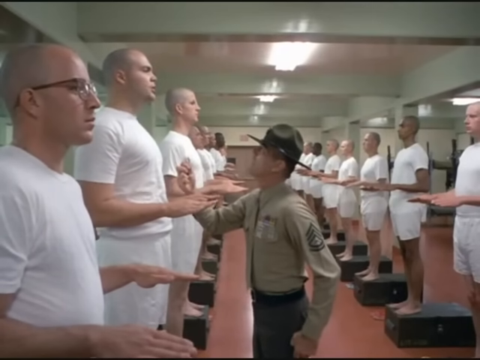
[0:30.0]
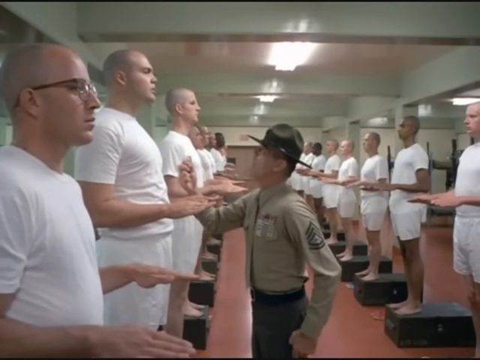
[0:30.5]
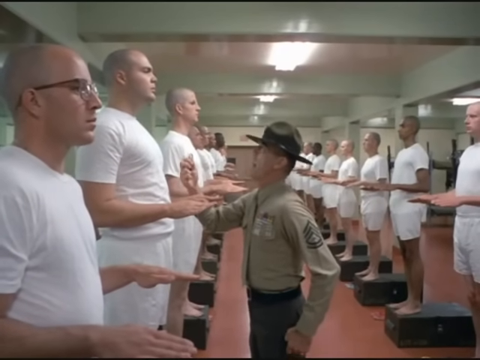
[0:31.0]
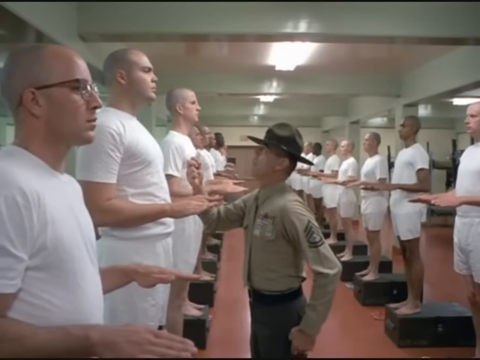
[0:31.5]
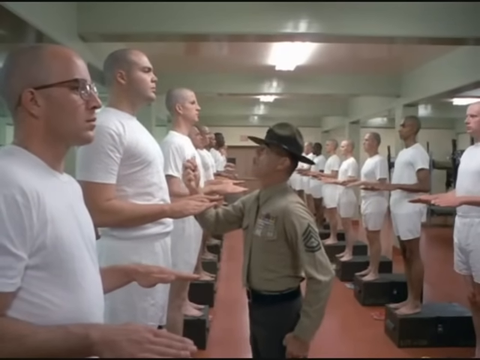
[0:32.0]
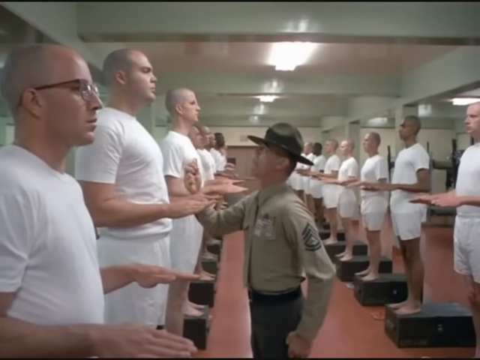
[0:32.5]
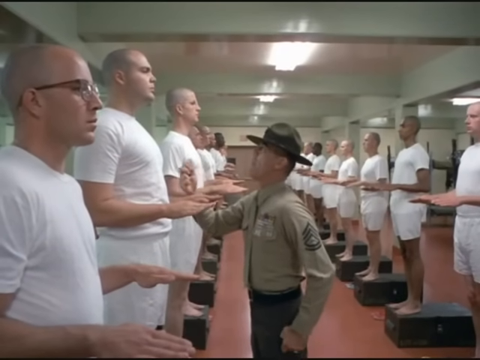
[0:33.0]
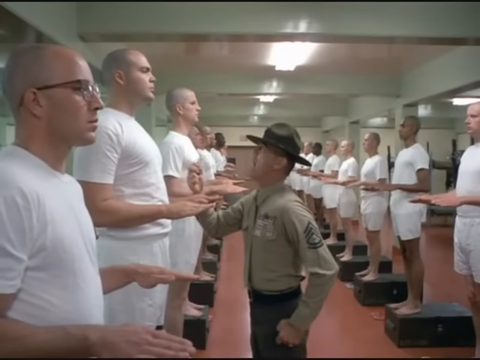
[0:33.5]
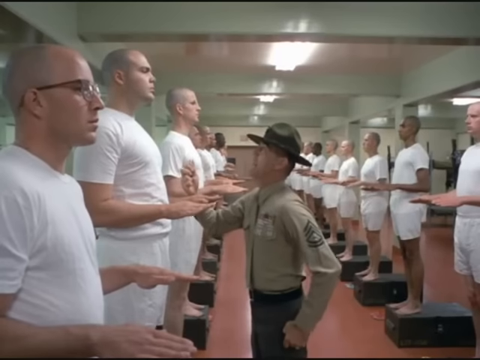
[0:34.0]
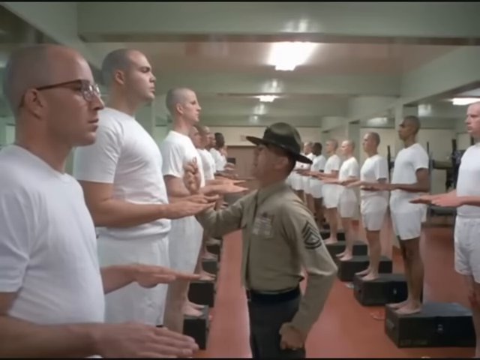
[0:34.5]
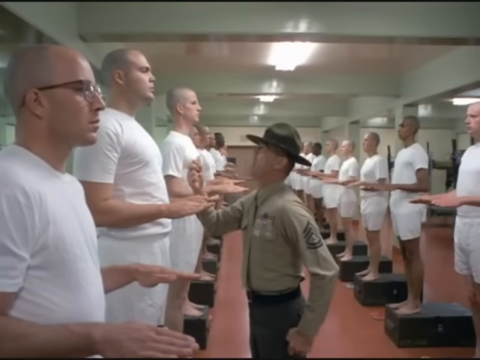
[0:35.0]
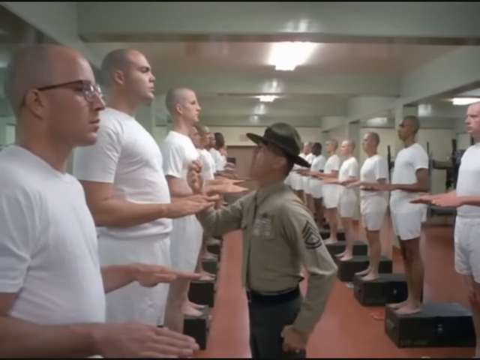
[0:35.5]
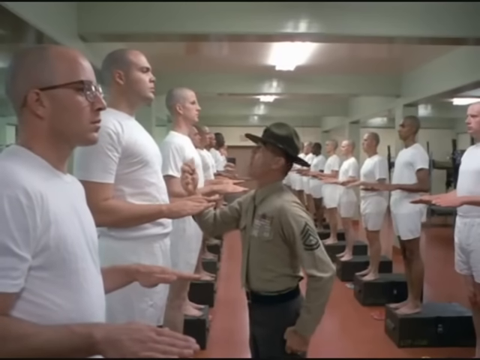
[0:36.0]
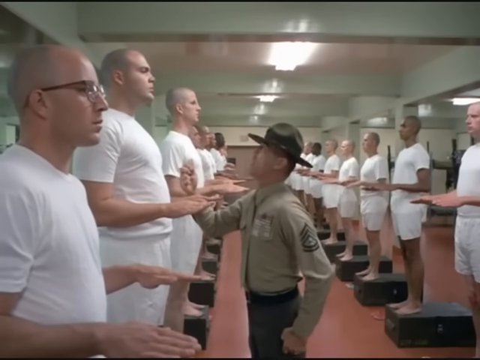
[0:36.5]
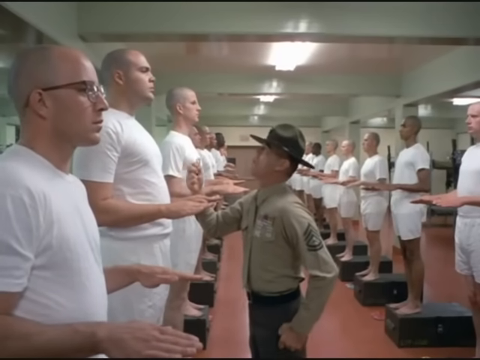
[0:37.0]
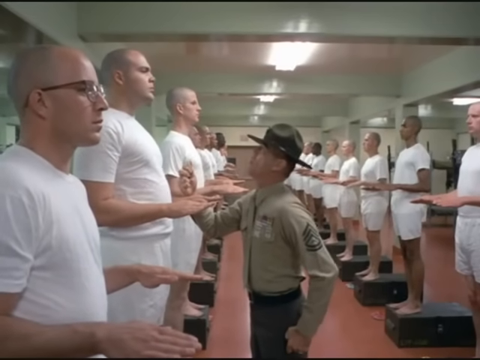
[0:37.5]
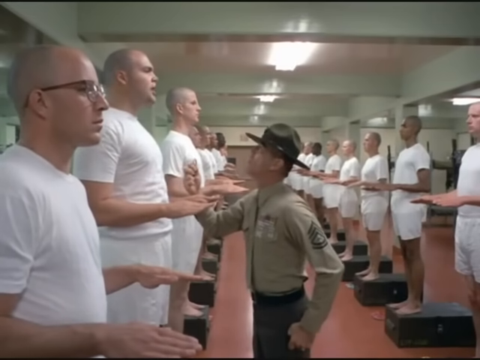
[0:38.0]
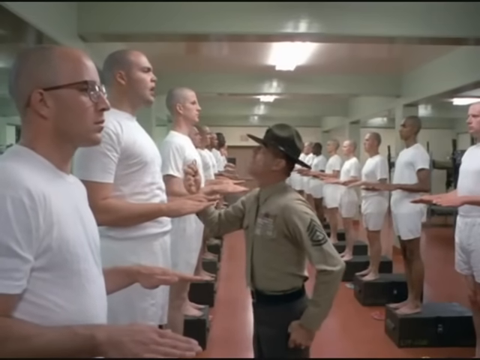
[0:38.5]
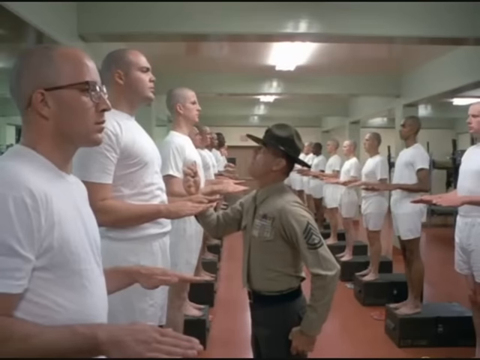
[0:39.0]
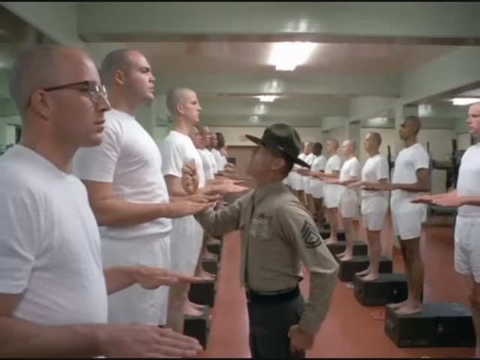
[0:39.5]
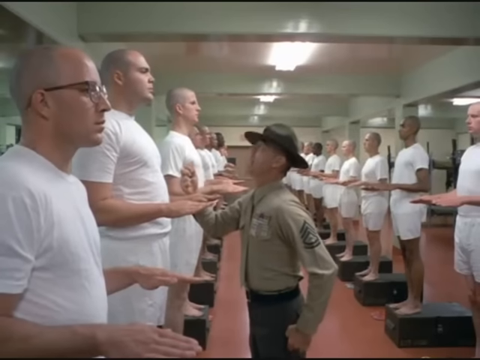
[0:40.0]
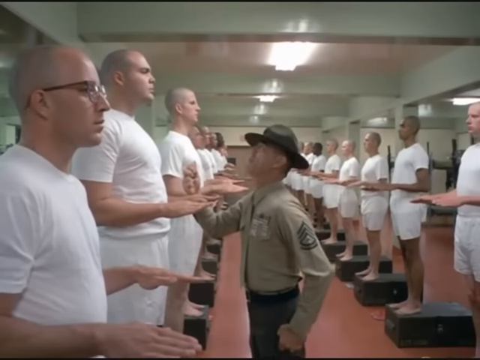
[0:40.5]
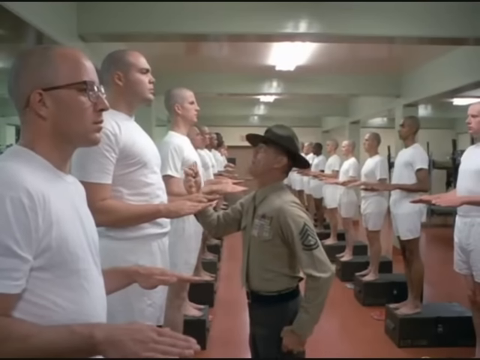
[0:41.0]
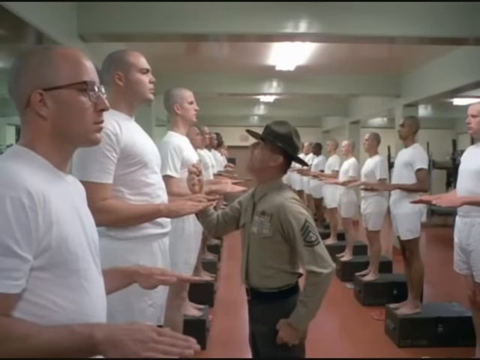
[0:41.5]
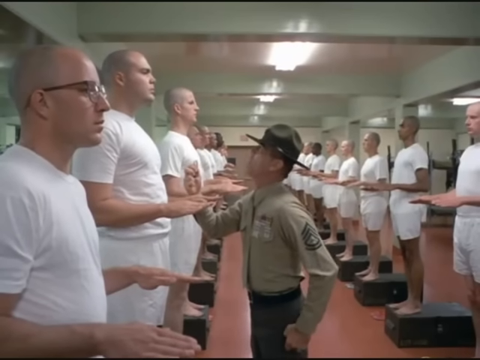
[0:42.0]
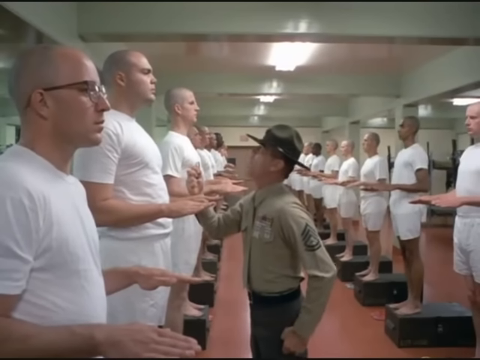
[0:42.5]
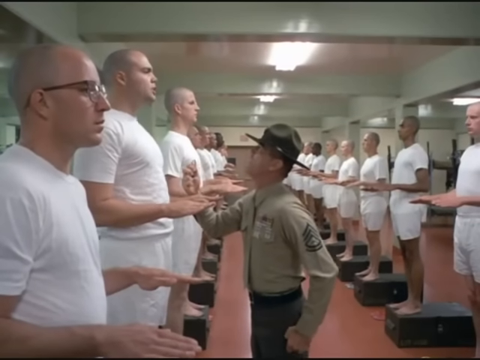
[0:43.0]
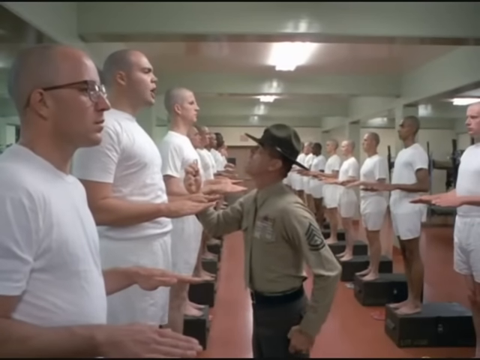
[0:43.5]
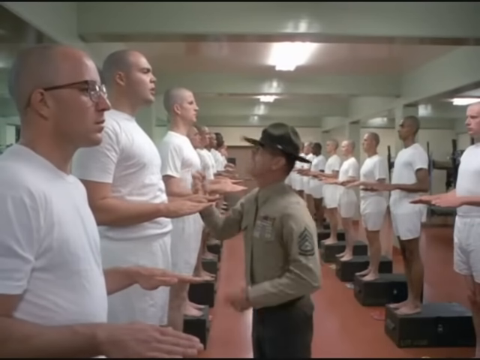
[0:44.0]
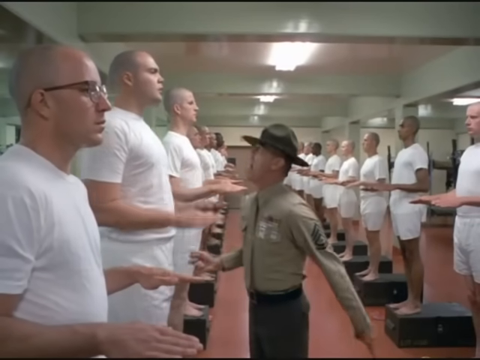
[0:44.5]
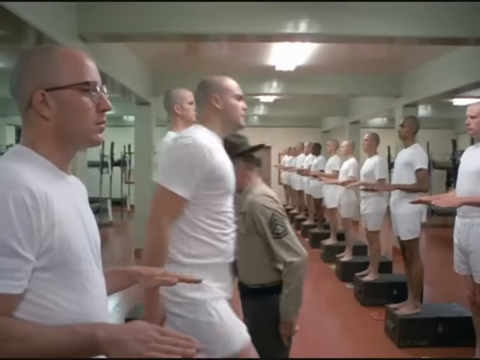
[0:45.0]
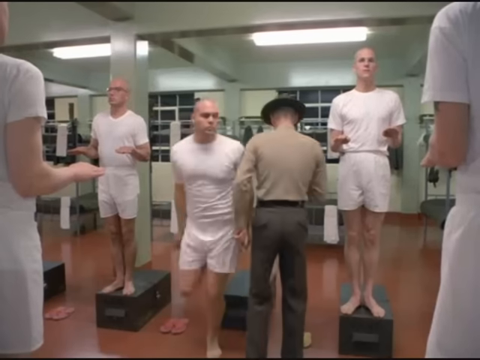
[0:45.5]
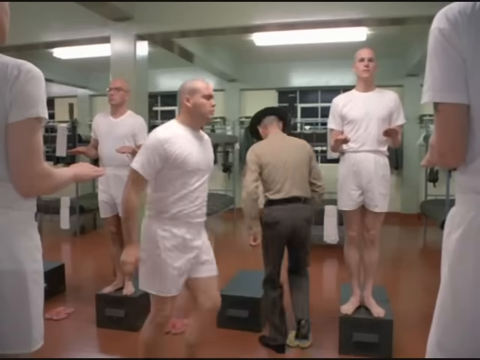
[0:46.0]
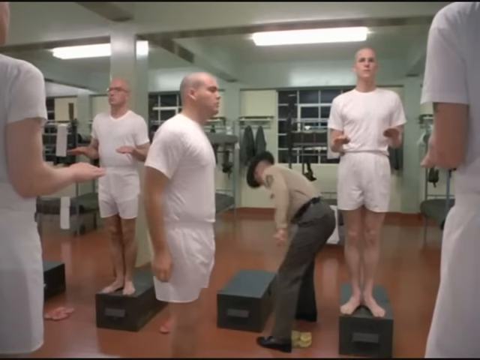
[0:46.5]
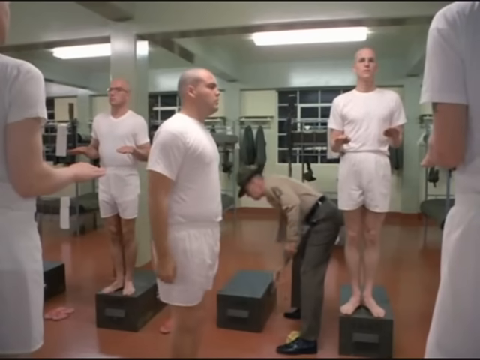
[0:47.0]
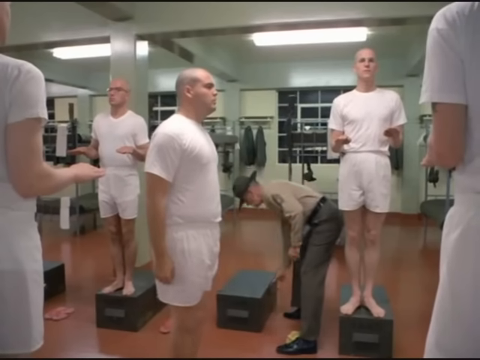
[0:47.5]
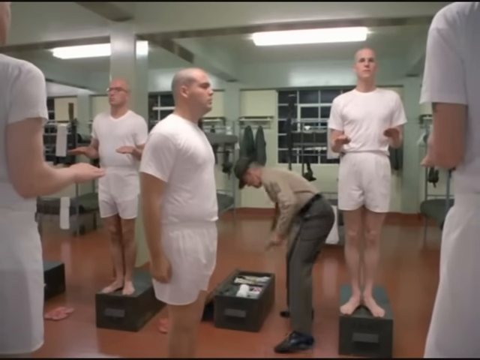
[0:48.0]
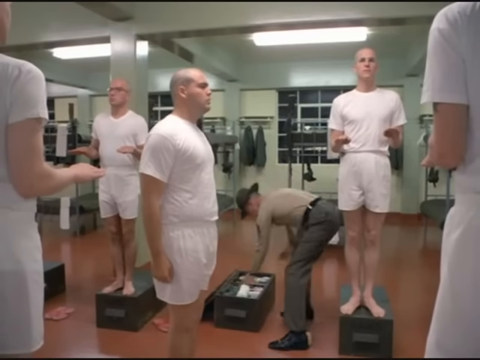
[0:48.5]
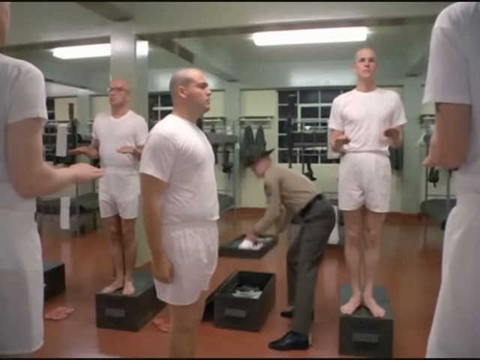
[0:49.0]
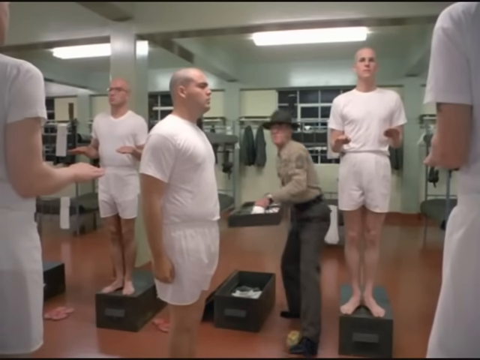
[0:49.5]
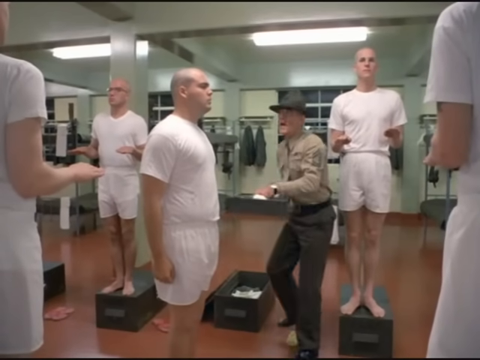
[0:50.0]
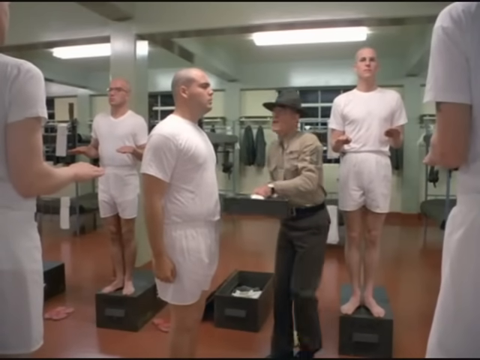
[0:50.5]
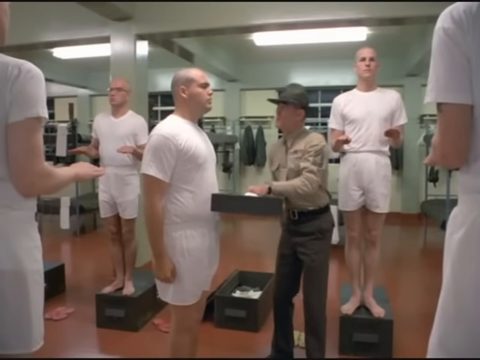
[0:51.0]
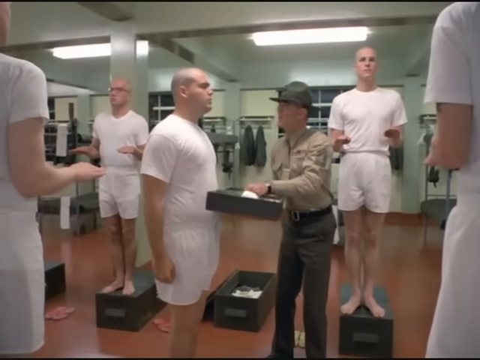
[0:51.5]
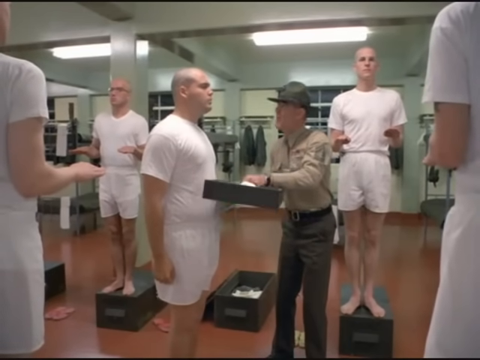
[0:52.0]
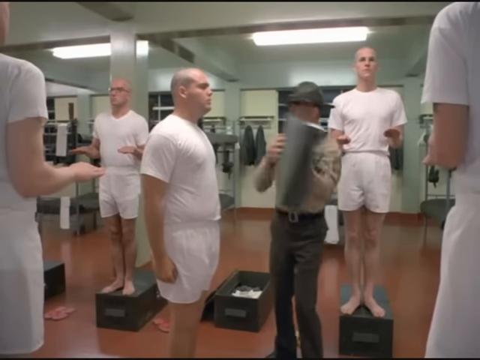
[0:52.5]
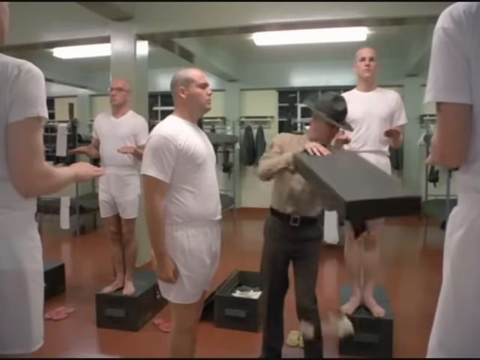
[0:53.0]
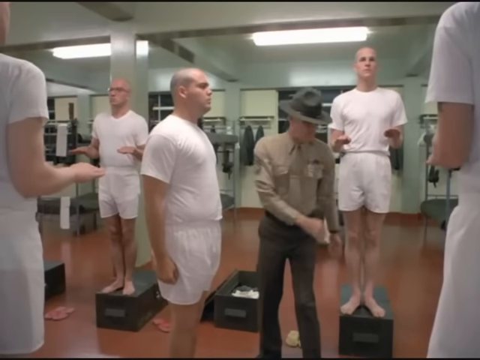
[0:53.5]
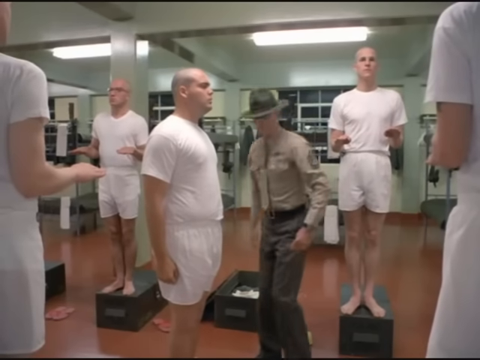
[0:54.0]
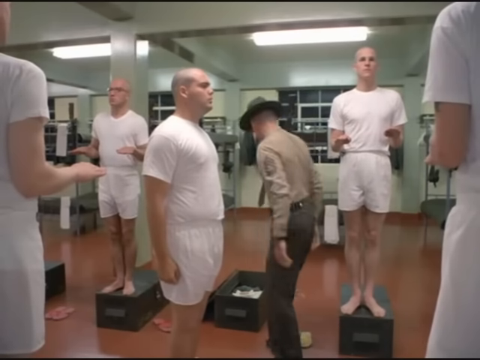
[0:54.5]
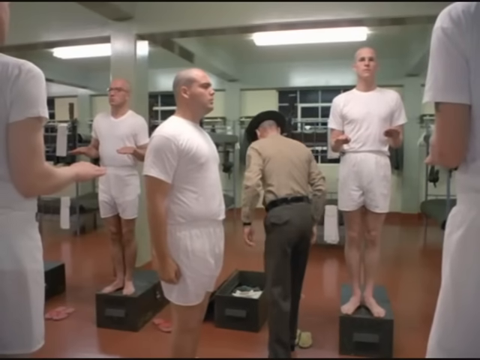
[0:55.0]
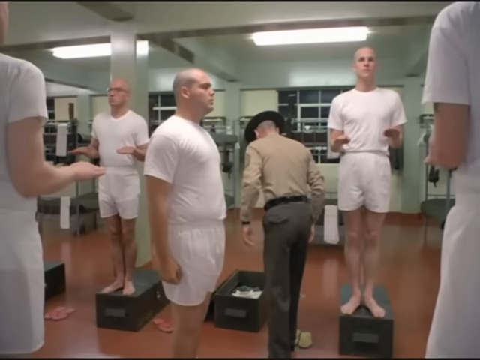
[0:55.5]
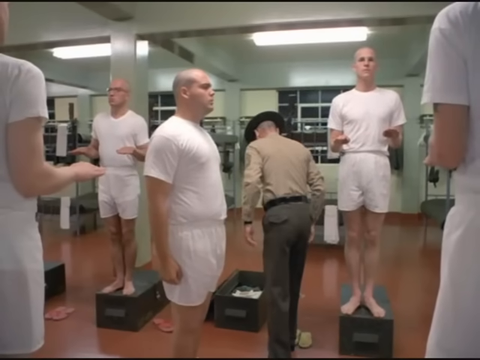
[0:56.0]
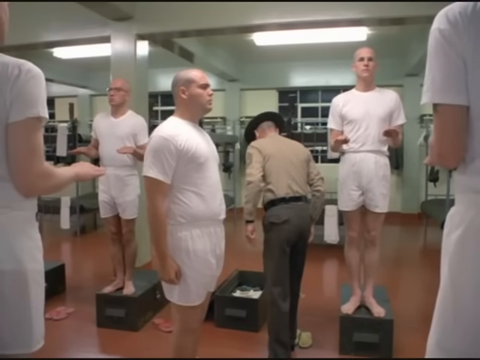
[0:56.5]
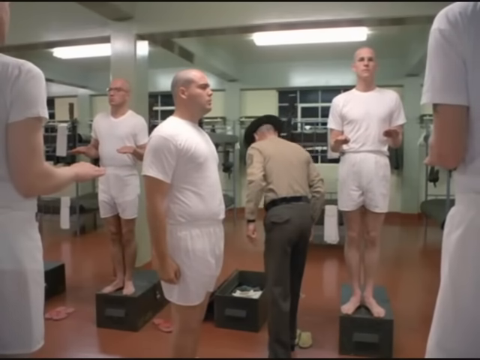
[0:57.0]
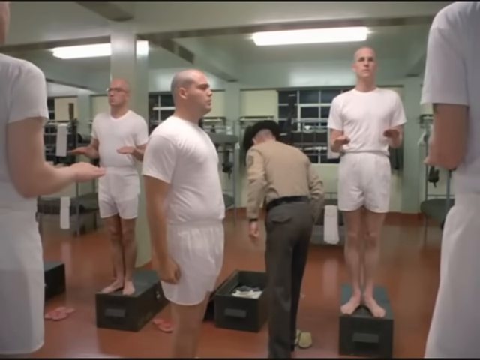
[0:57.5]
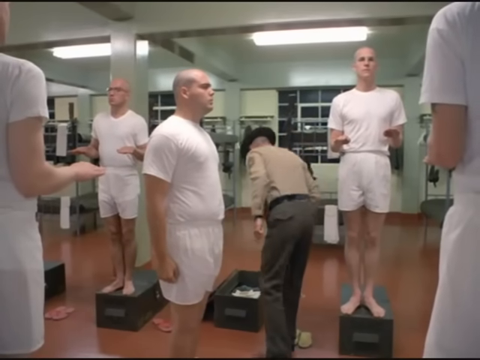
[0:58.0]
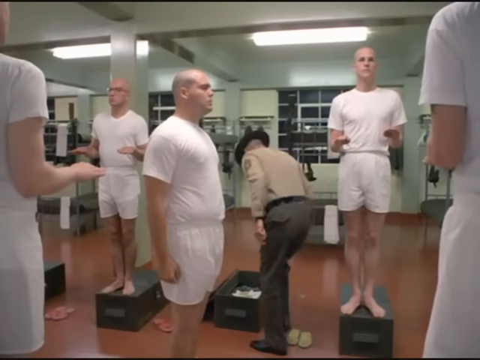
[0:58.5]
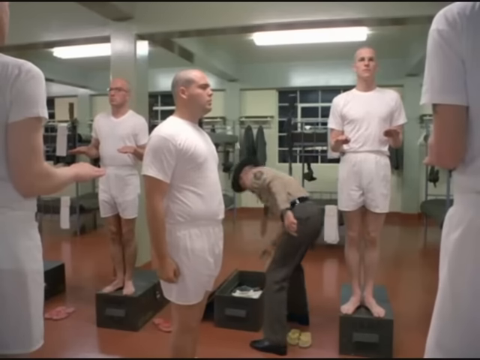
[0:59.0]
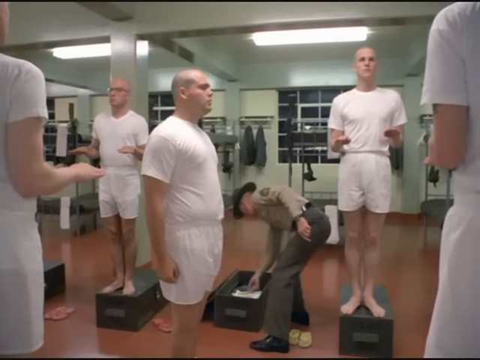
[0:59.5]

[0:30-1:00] A drill sergeant holds a padlock in his right hand toward a trainee while multiple other trainees stand on foot lockers with their hands outstretched in front of them. The trainee he is yelling at is taller than the others, and the drill sergeant holds the padlock to the trainee's chest as he yells. He shouts a few words, the trainee replies, and the drill sergeant continues shouting at him. The drill sergeant motions toward the ground, and the trainee steps down from the footlocker he was standing on and stands at attention in the middle of the aisle. The drill instructor opens the footlocker and starts picking up the contents, dumping them out starting with a top tray. He stops as he goes to pull out more things, then reaches into the footlocker and grabs an object.